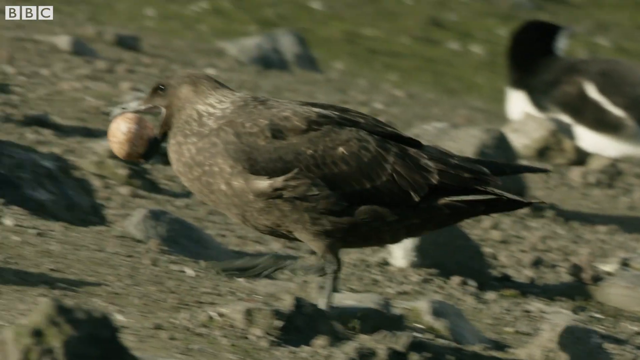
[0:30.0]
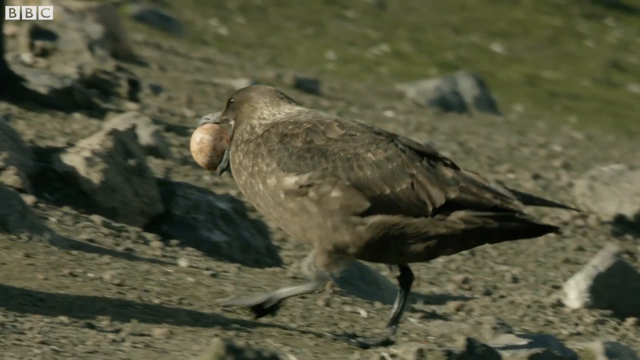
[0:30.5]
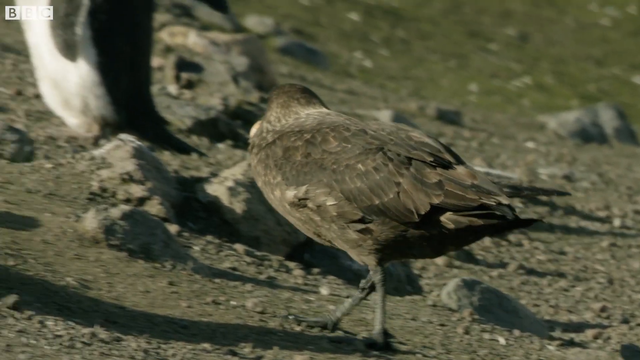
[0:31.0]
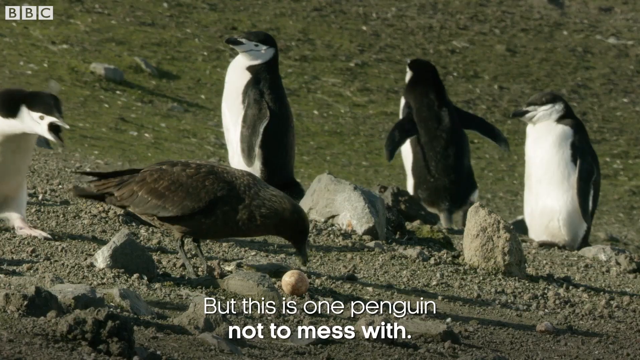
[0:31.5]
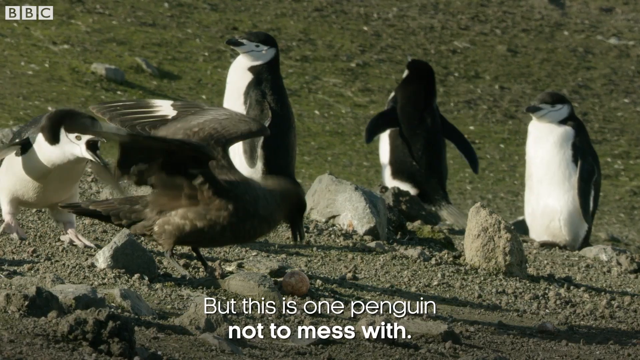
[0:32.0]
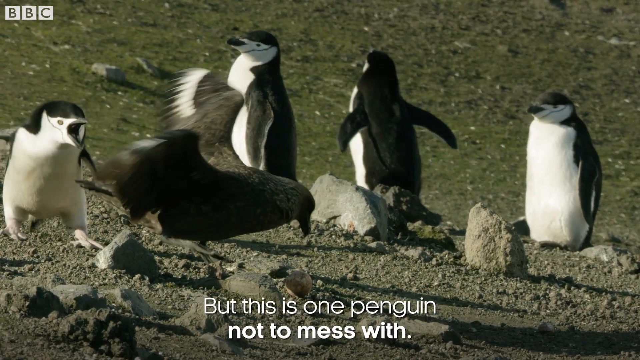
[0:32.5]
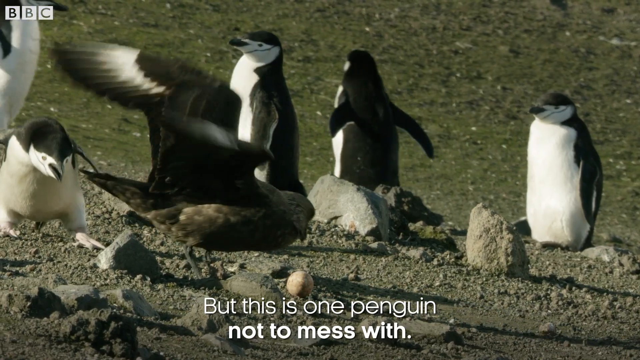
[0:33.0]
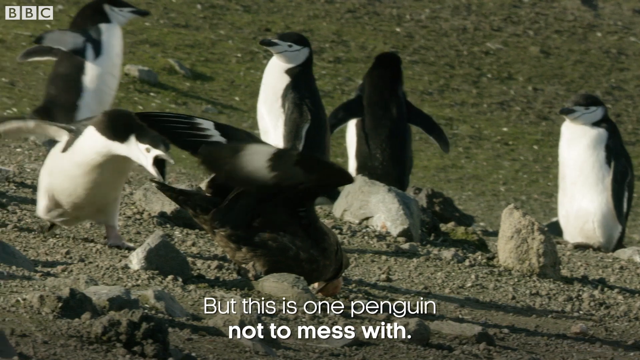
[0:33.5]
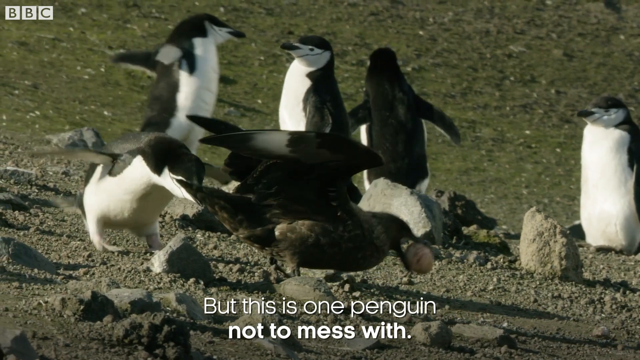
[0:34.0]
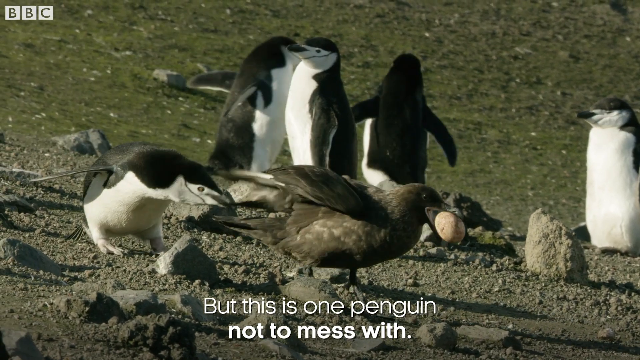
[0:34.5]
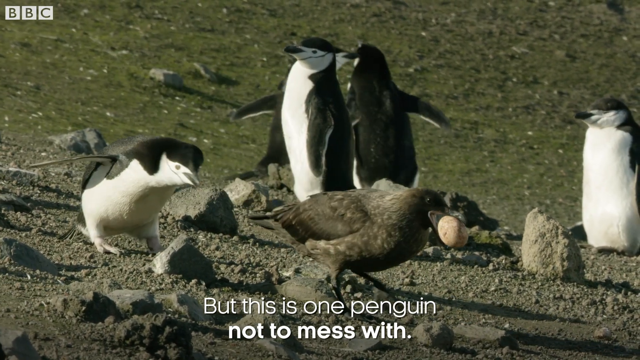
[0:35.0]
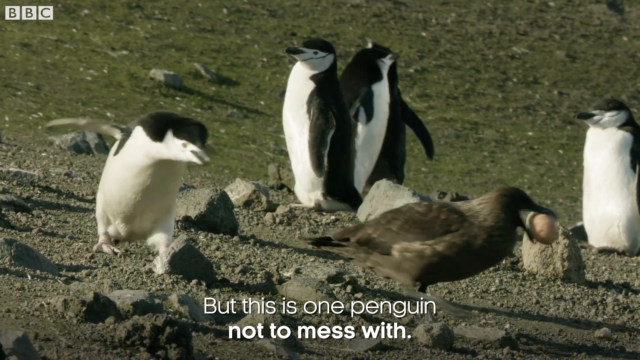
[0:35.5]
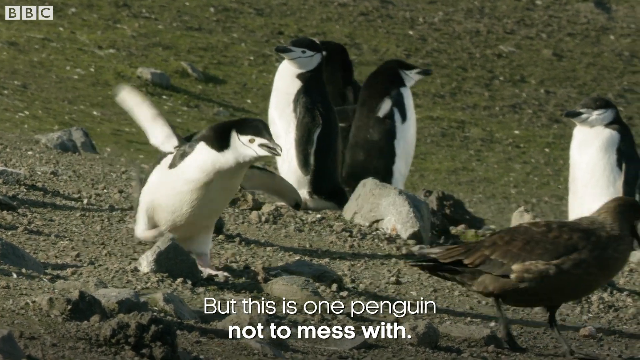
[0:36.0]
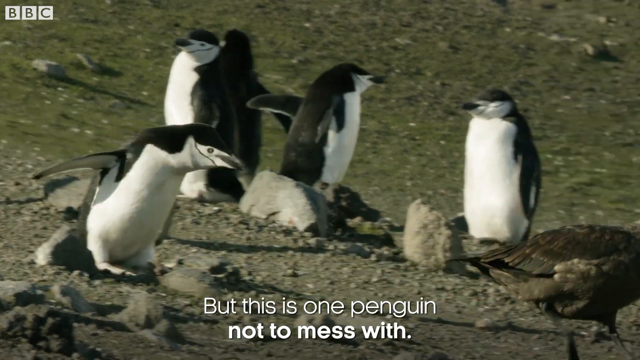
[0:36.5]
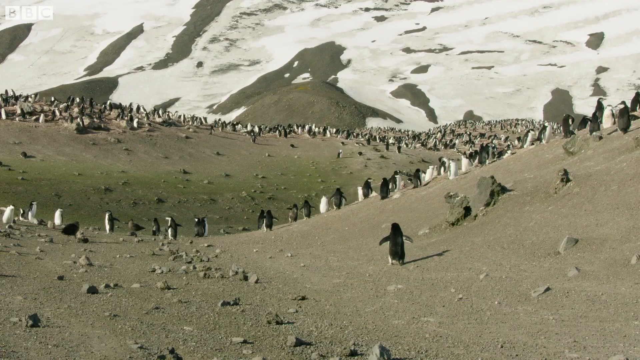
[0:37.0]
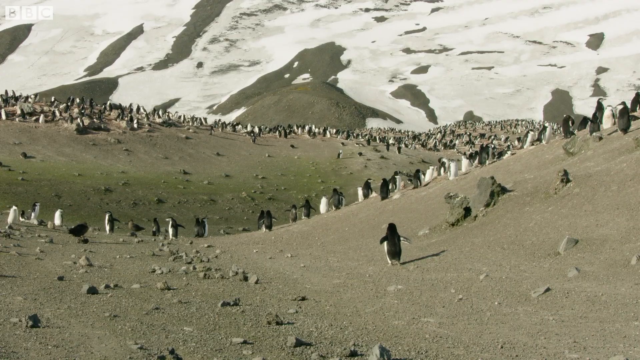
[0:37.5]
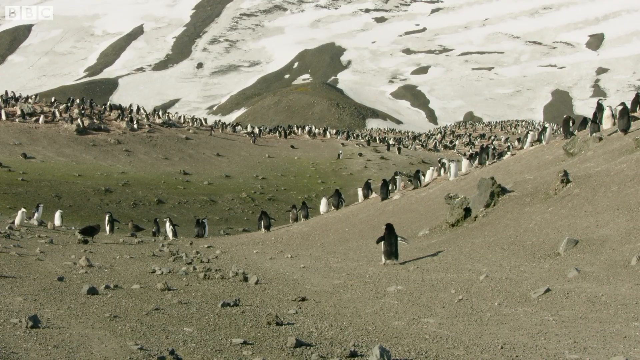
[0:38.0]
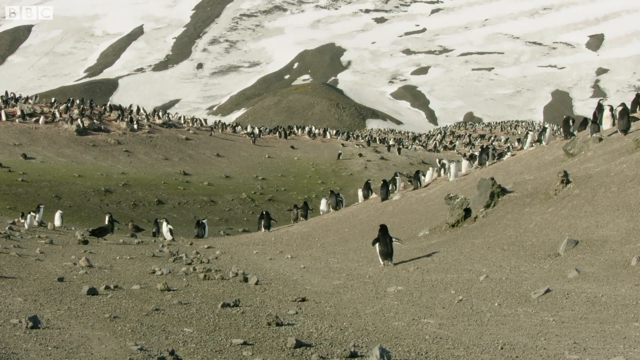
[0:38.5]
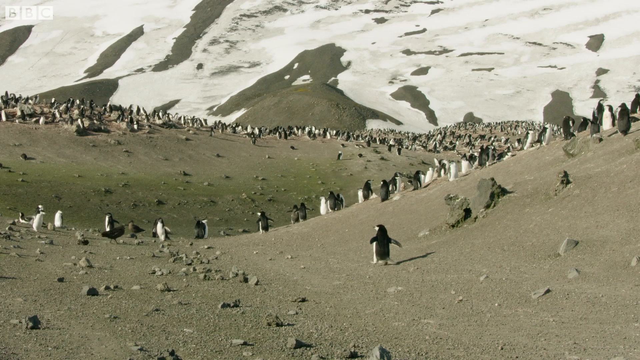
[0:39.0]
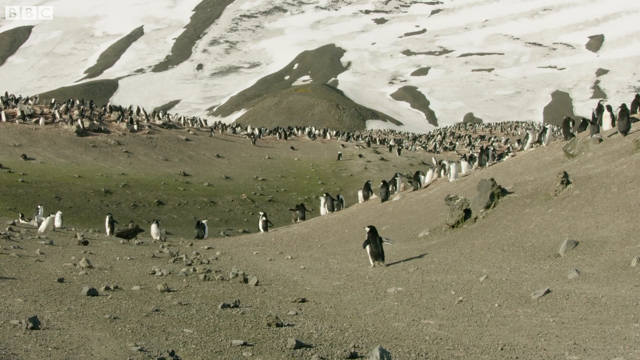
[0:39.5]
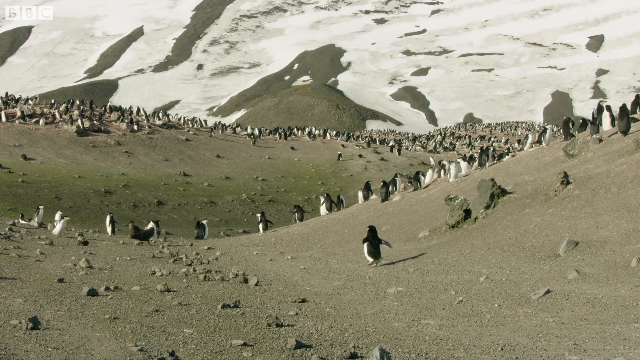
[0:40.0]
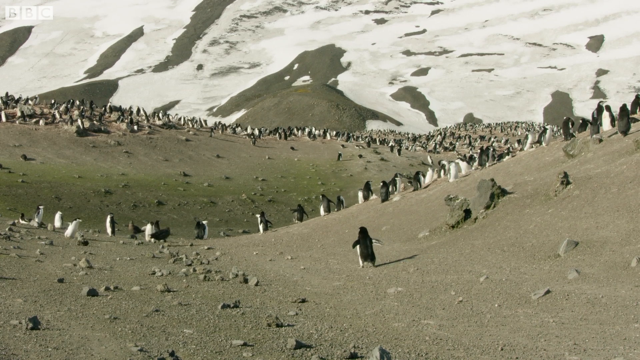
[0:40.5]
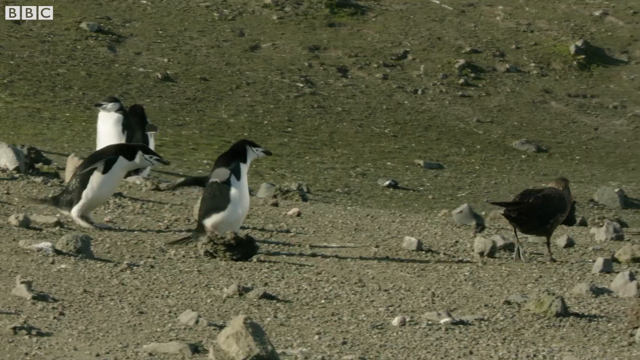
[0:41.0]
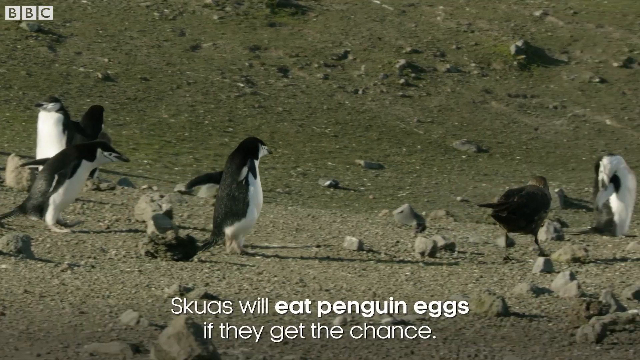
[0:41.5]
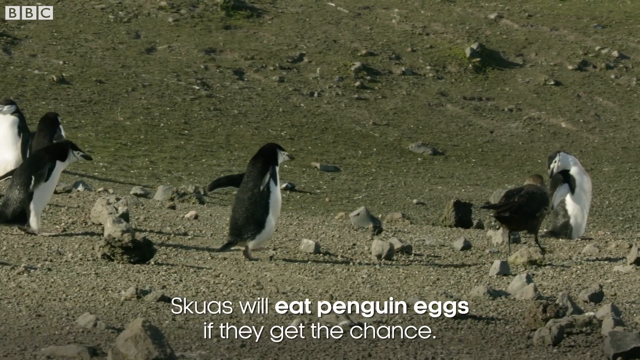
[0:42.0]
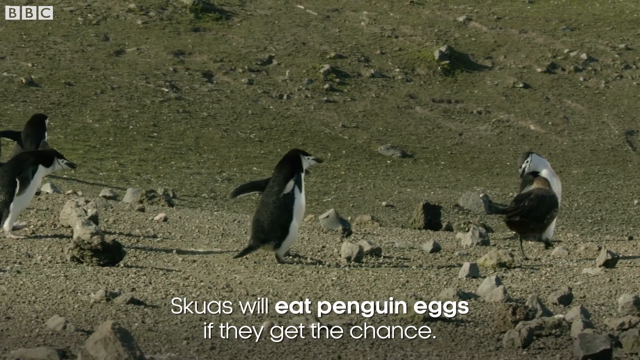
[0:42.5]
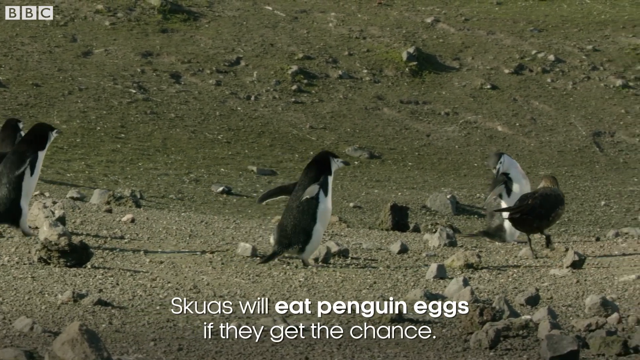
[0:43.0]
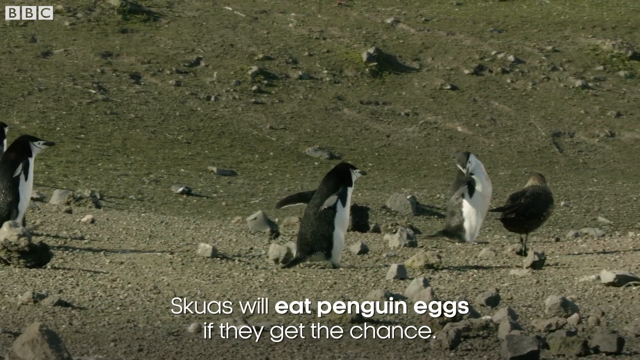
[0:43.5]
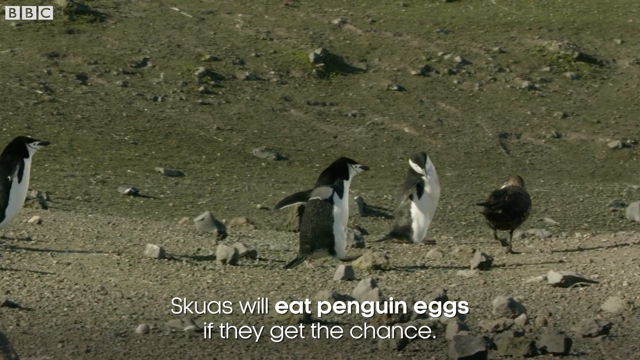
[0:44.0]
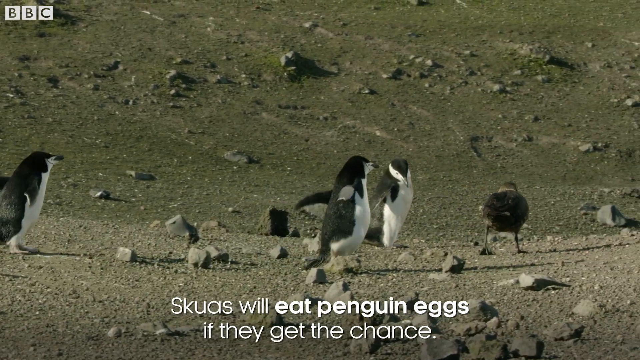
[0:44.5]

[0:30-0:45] A hill is filled with king penguins. Some water birds have noticed eggs lying around and are trying to steal them. The birds pick the eggs up in their beaks and start to walk away, trying to fly off and run away as quickly as they can. The penguins close behind them notice the theft and chase after the birds, pecking at them and trying to get them to release the eggs. The birds are persistent and continue to walk away with the egg in their beak while a penguin chases after a bird and persistently tries to get it to release the egg.